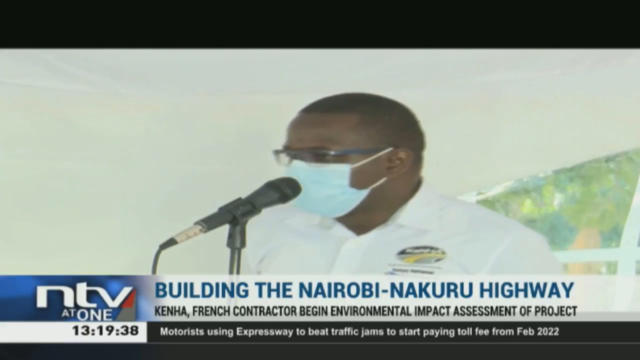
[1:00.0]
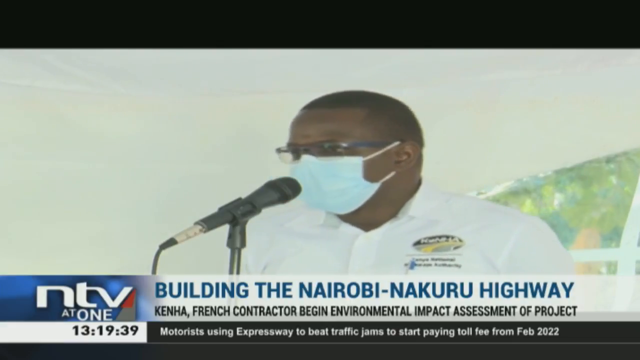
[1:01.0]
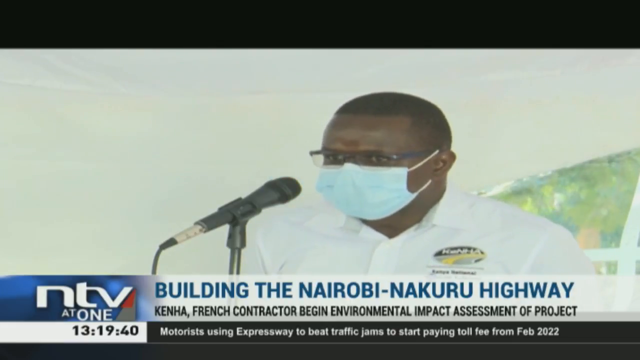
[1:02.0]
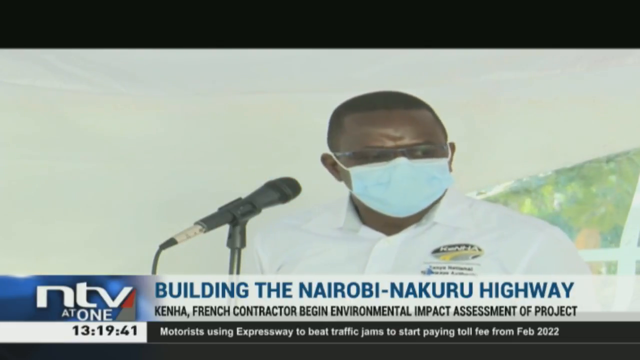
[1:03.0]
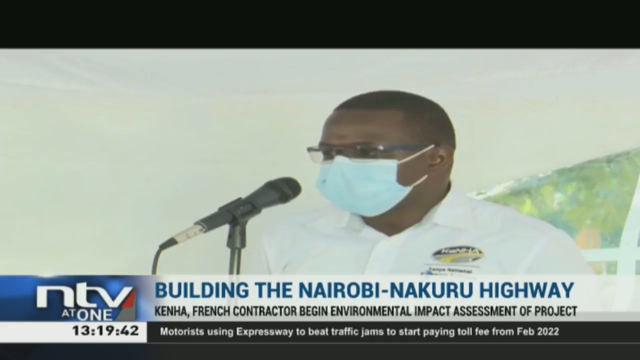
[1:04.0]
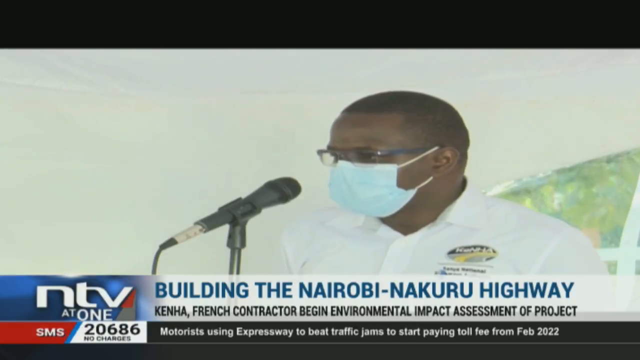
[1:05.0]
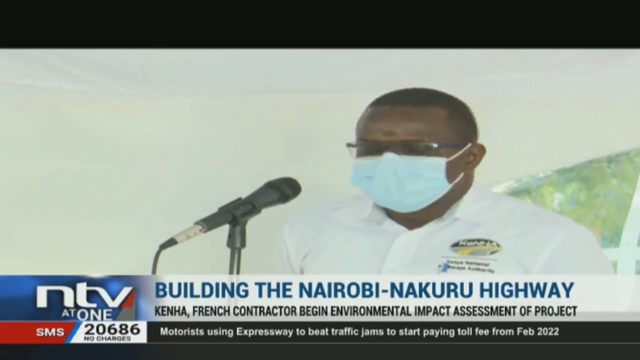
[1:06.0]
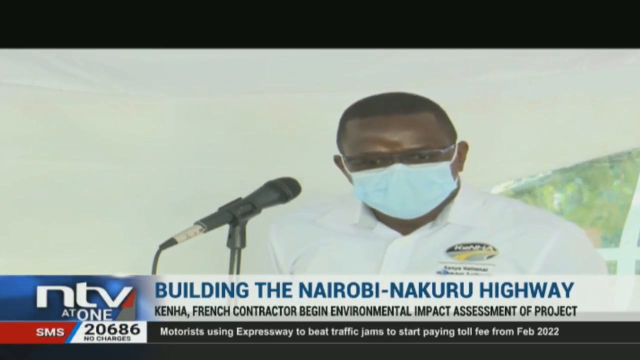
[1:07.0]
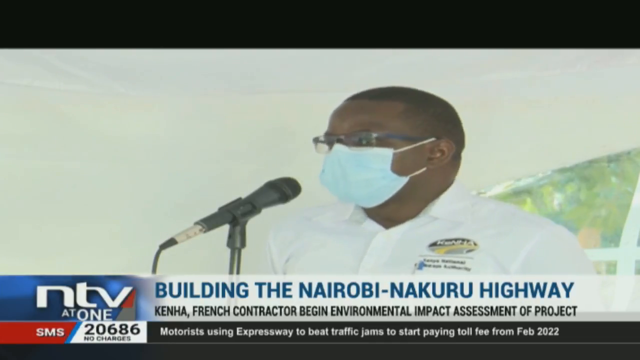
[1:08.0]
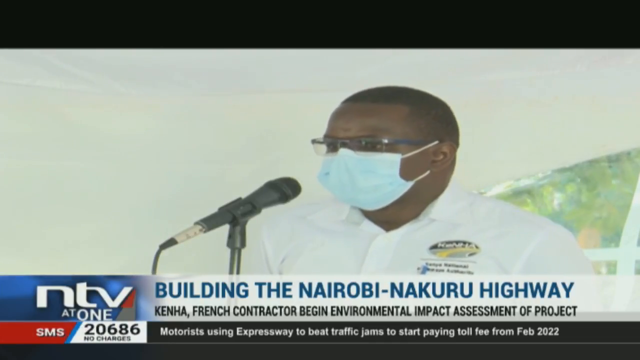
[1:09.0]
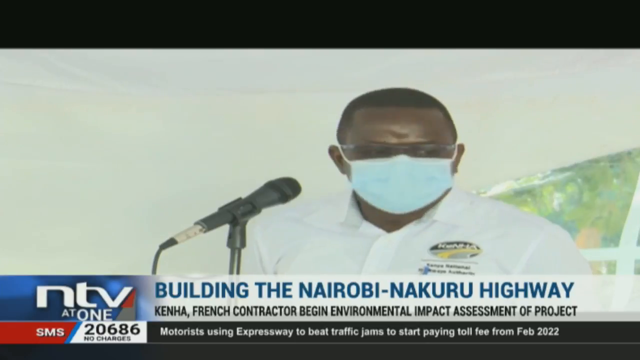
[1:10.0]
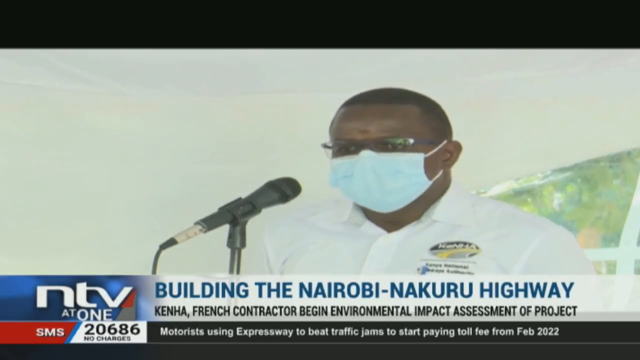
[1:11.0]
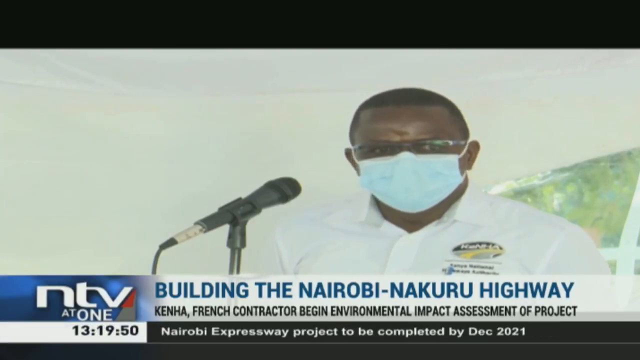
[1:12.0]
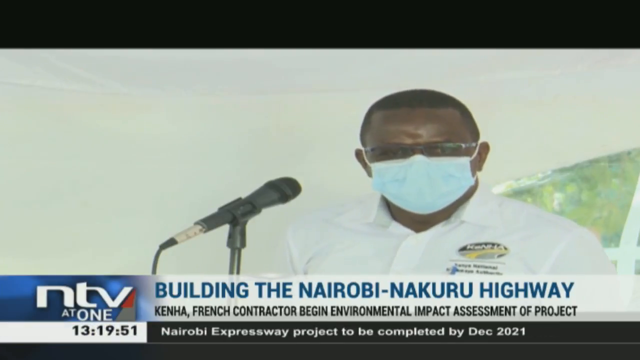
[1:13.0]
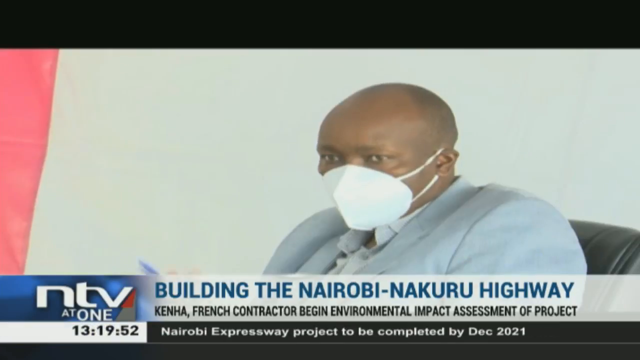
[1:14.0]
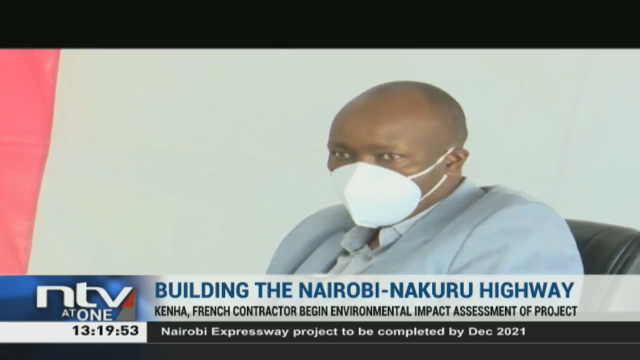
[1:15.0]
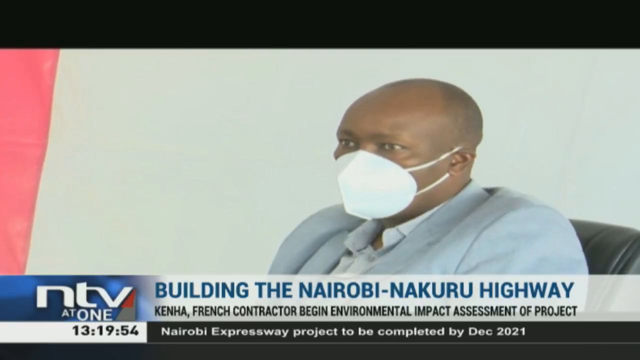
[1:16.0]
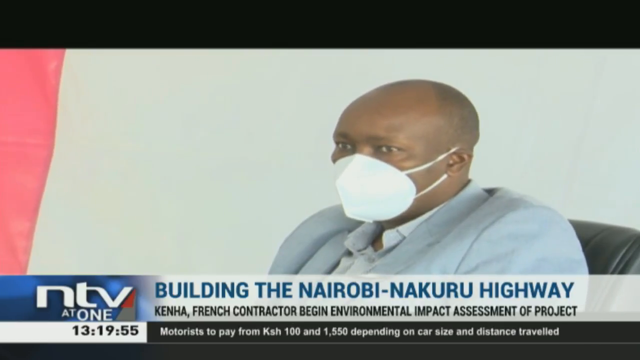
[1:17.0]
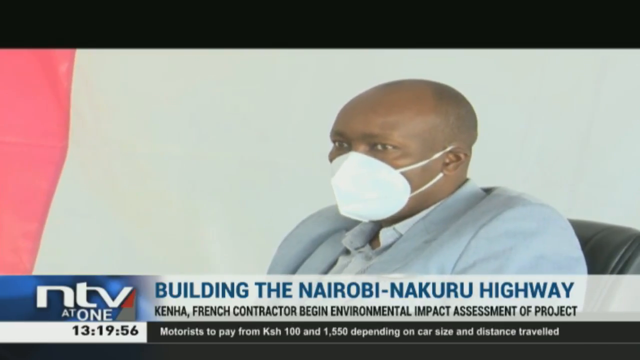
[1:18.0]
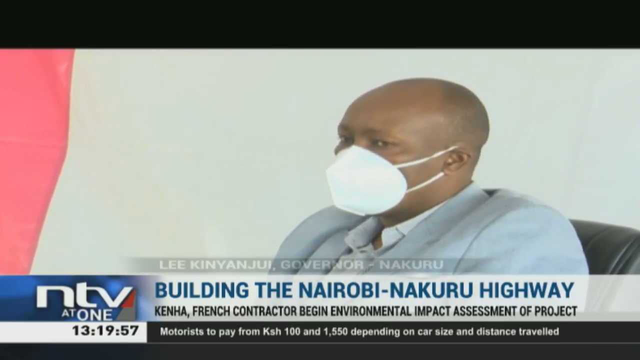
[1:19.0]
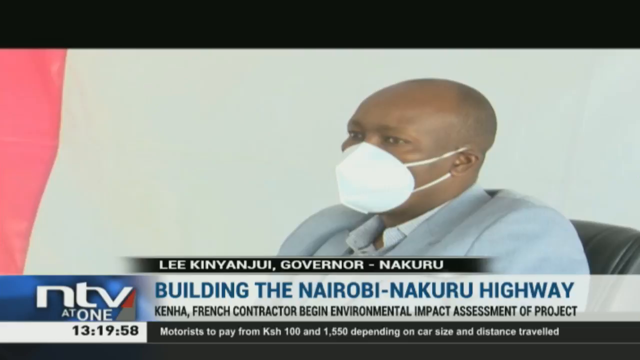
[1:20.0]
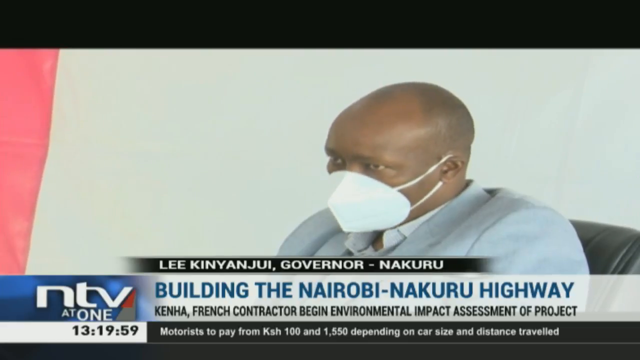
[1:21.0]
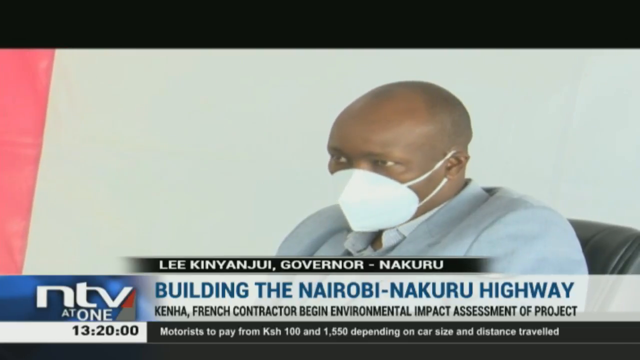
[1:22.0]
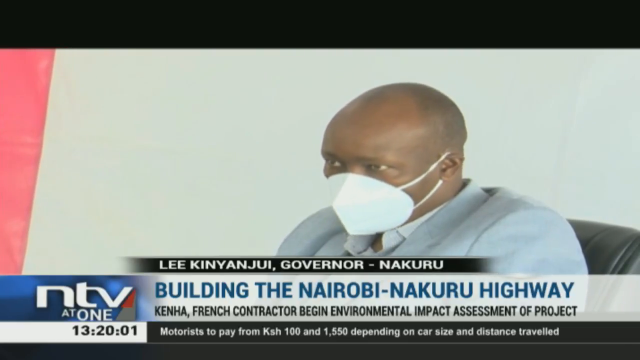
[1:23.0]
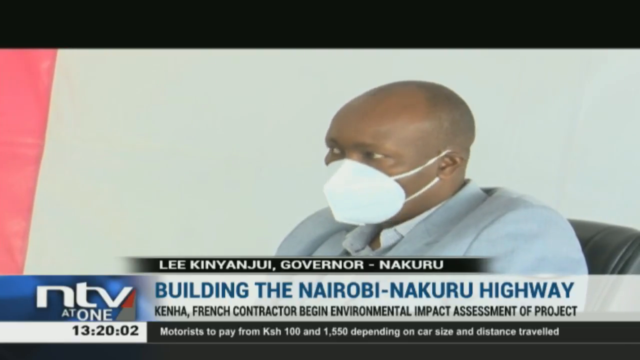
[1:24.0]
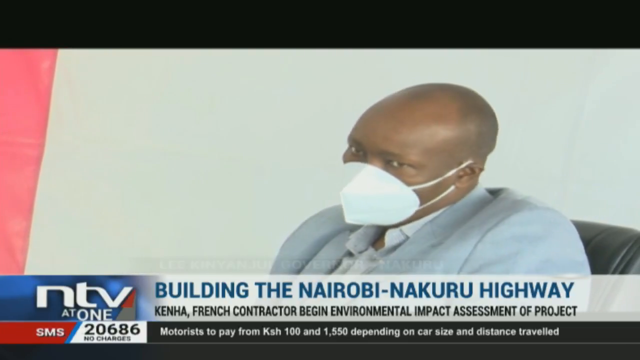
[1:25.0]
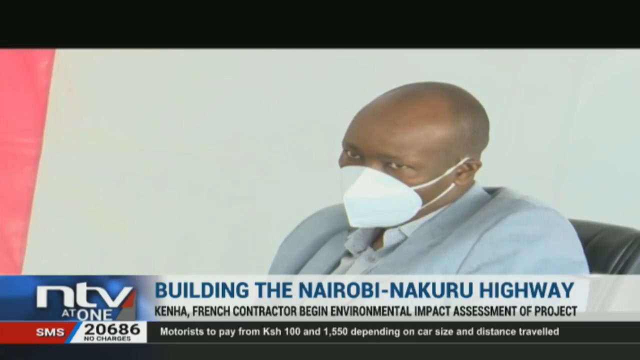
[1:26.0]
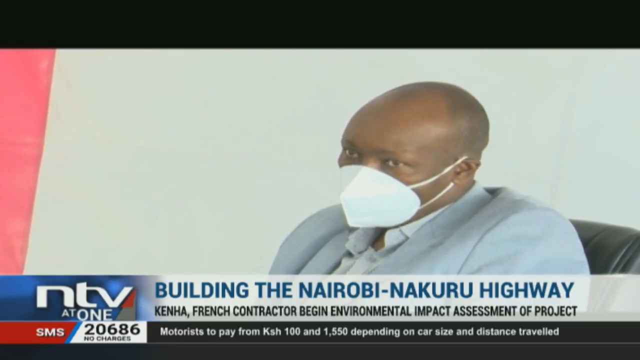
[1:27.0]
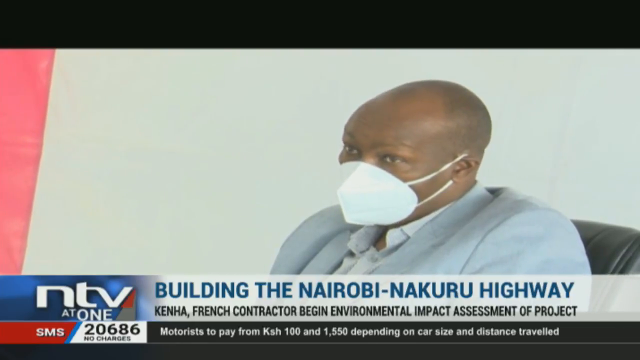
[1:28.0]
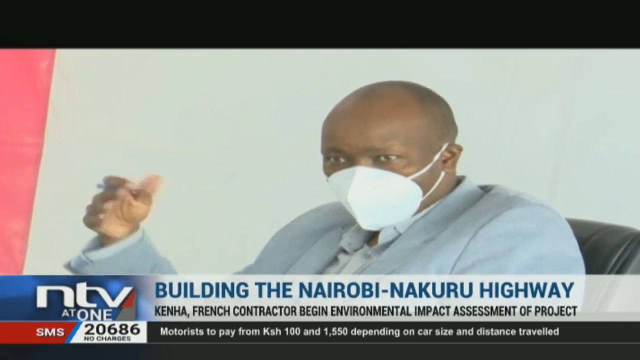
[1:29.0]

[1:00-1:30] The man continues speaking at the microphone, and below him the text says "building the Nairobi Nakuru Highway." A different man is then shown, wearing a white mask, a light blue coat and a white shirt, with no microphone directly in front of him. He is identified as Lee Kinyanjui, governor, Nakuru. He is apparently speaking about the road building, the topic shown at the bottom of the screen, gesturing with a pen in his hand as he makes his points. He is nearly bald, with almost no hair on his head, unlike the previous man's tightly cut short hair. The time reads 13:19 and then changes to 13:20.